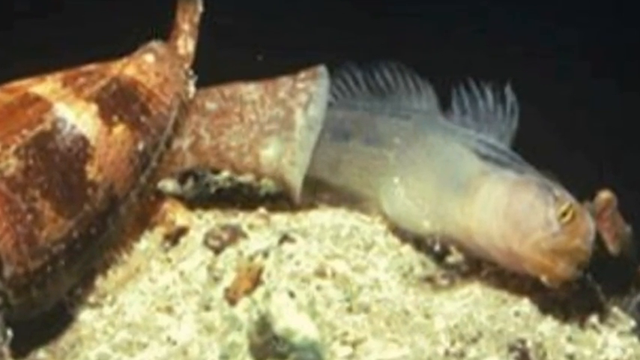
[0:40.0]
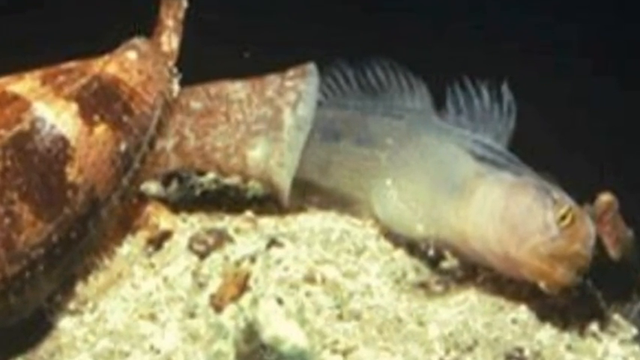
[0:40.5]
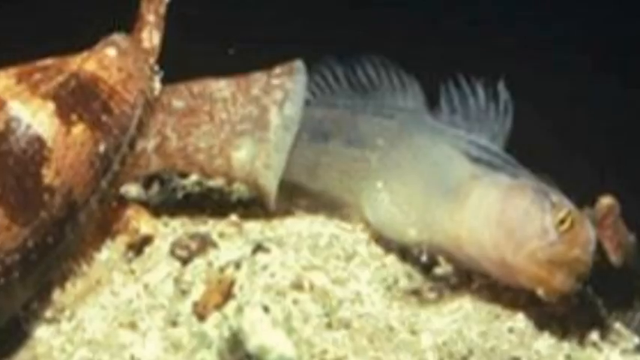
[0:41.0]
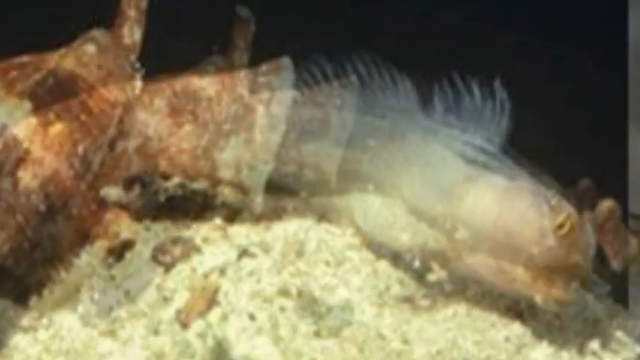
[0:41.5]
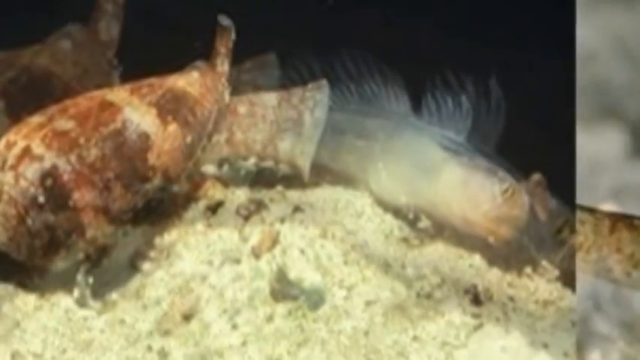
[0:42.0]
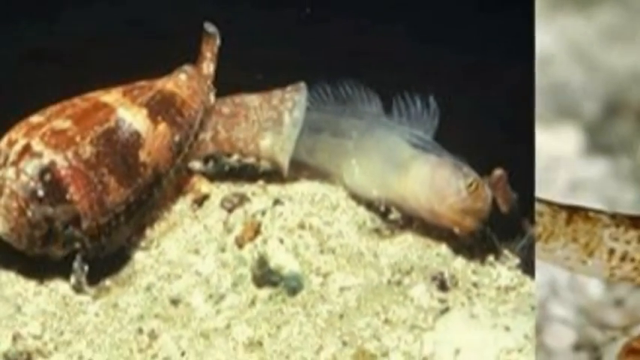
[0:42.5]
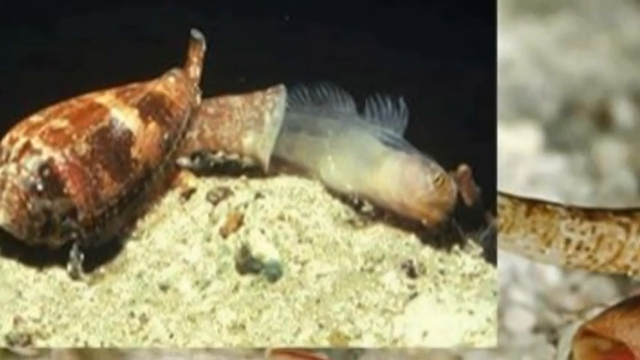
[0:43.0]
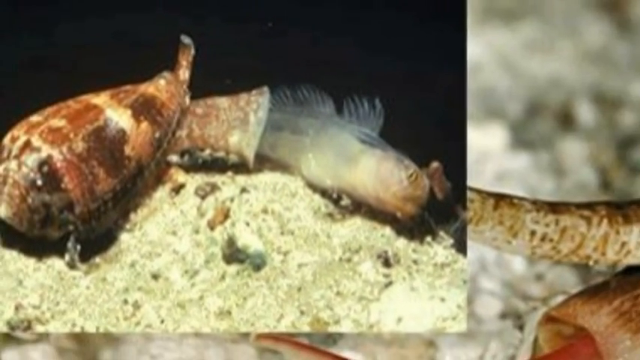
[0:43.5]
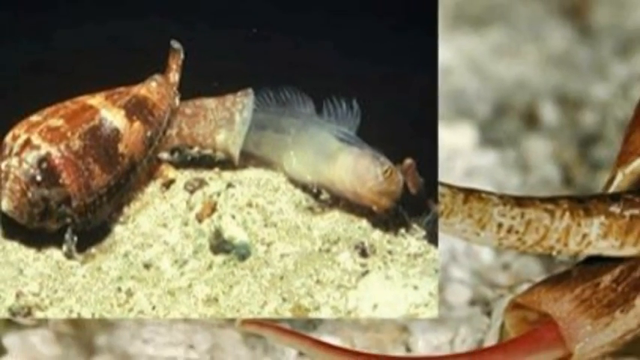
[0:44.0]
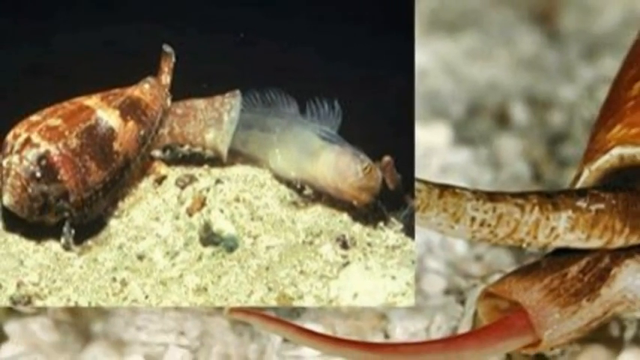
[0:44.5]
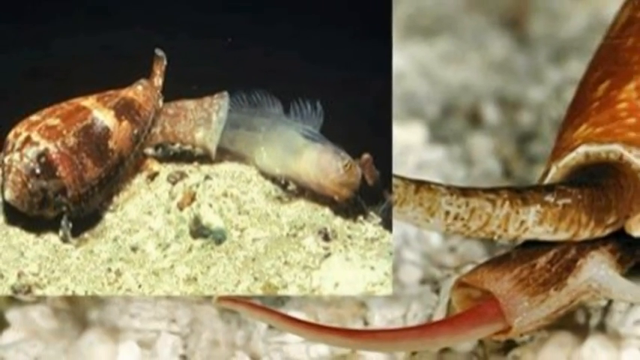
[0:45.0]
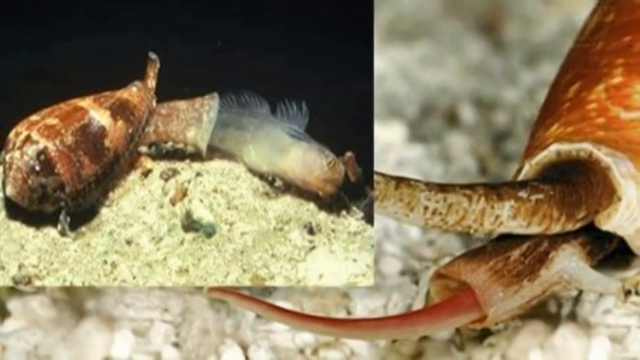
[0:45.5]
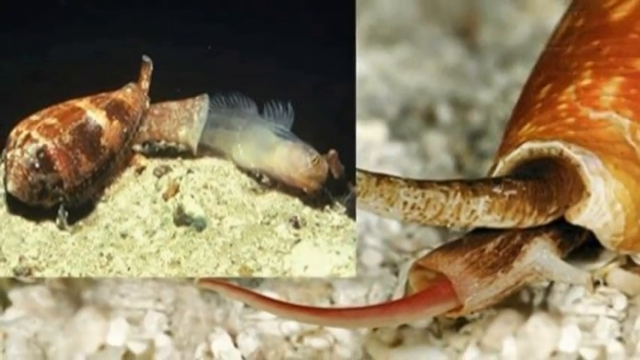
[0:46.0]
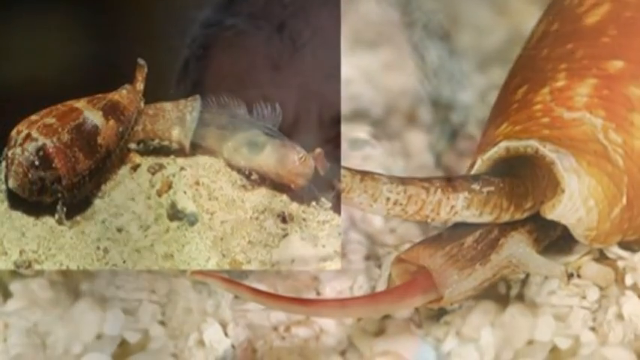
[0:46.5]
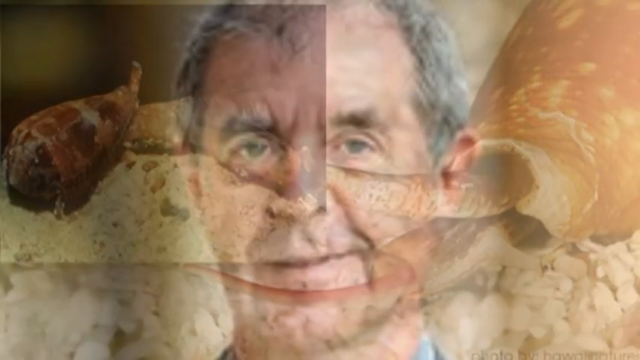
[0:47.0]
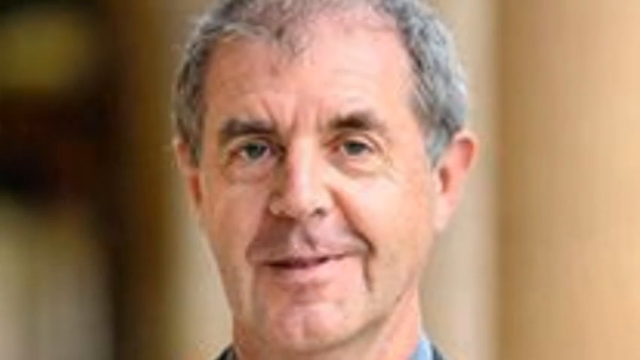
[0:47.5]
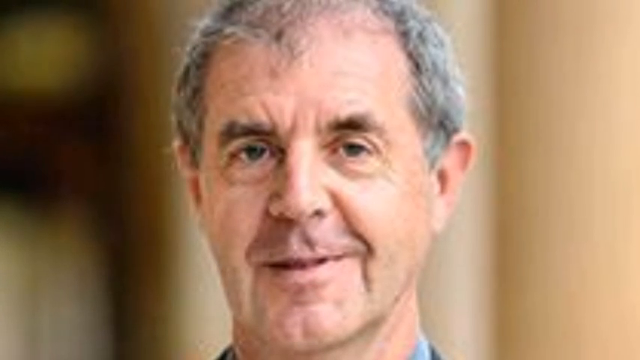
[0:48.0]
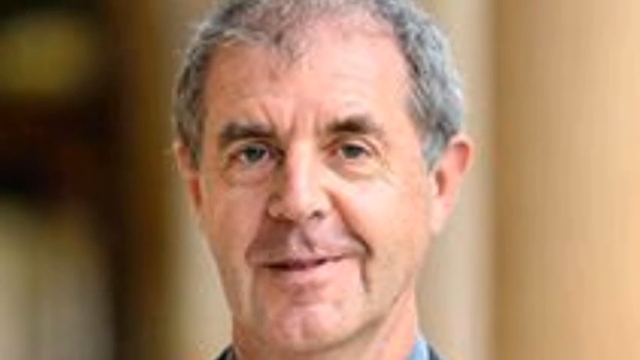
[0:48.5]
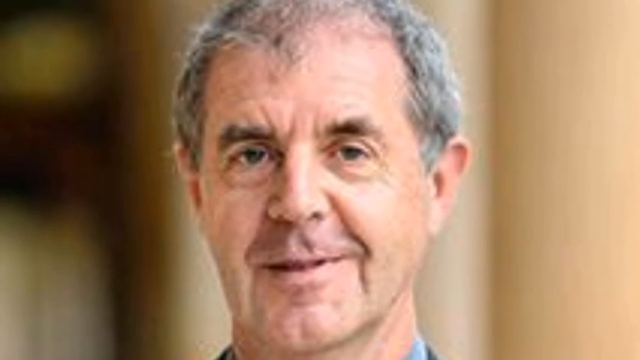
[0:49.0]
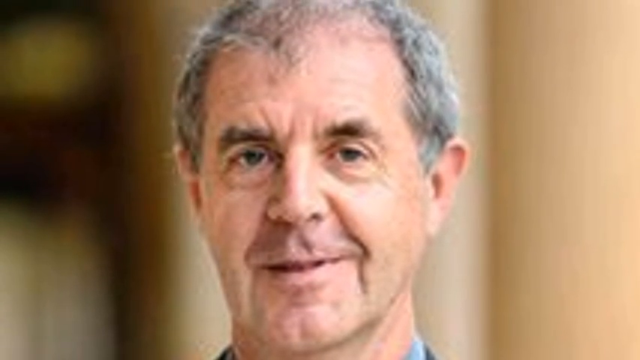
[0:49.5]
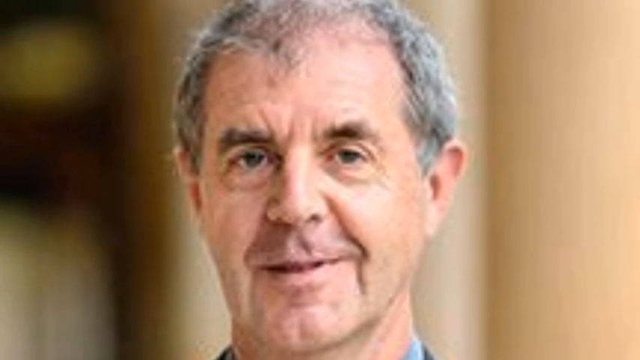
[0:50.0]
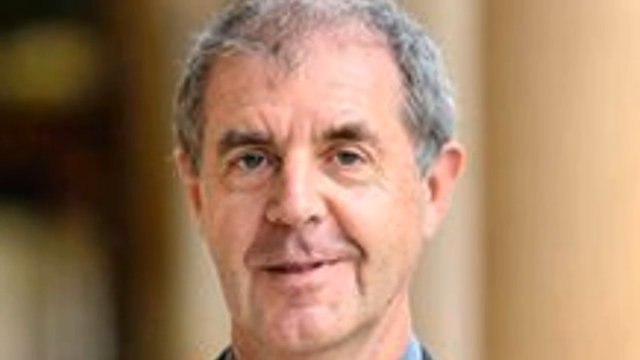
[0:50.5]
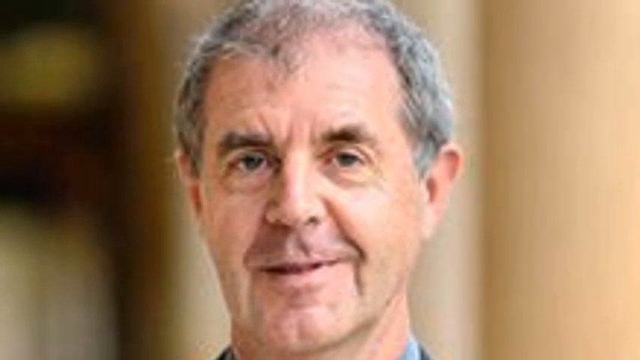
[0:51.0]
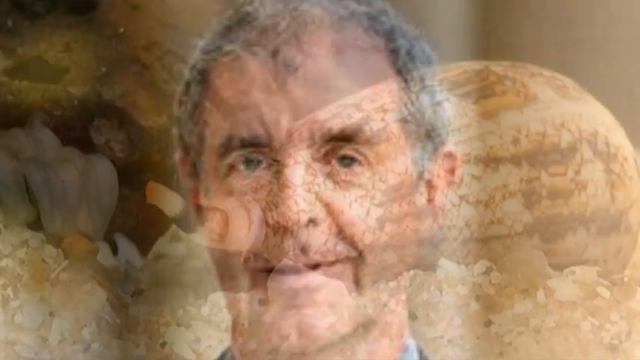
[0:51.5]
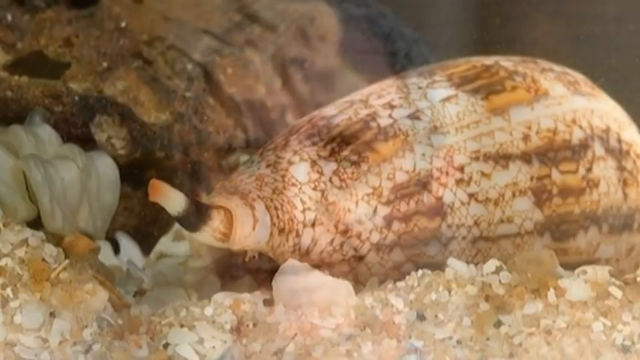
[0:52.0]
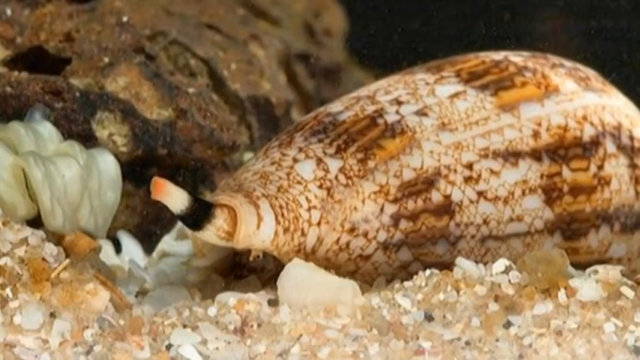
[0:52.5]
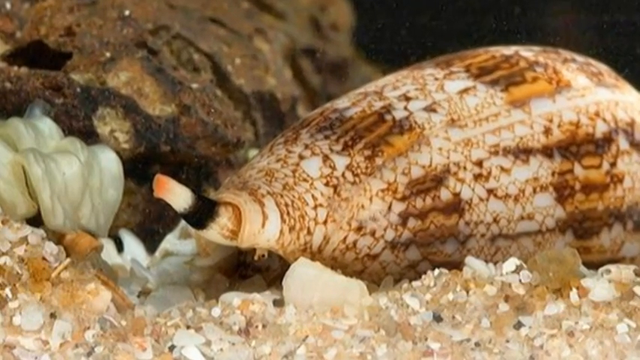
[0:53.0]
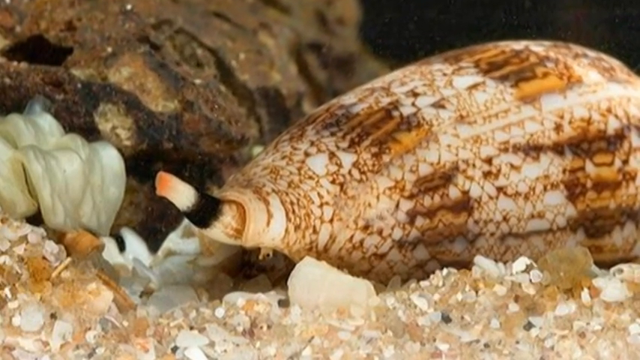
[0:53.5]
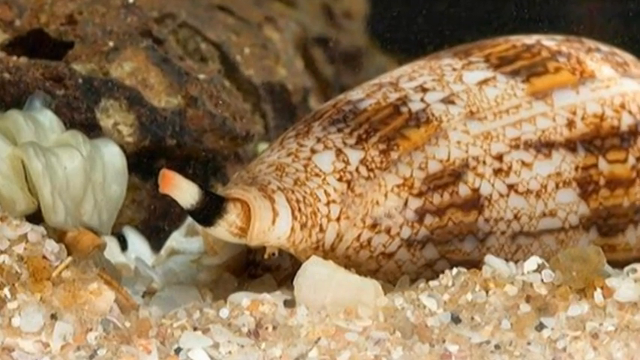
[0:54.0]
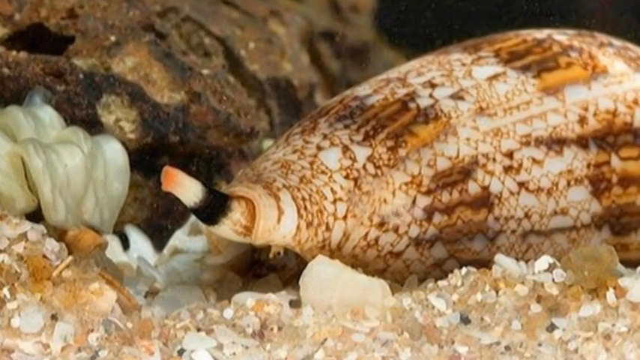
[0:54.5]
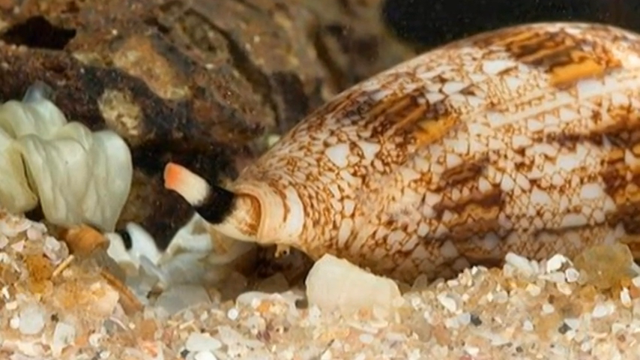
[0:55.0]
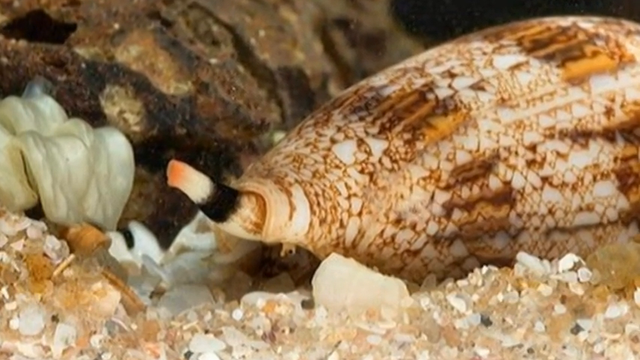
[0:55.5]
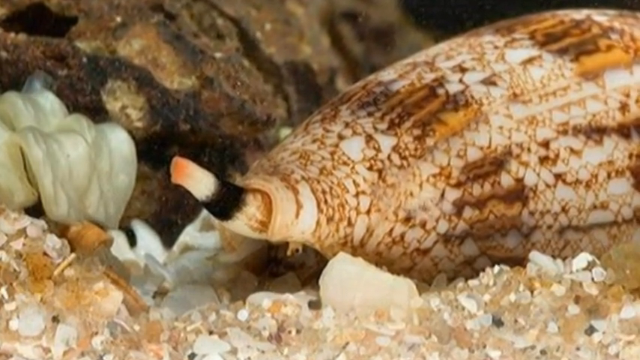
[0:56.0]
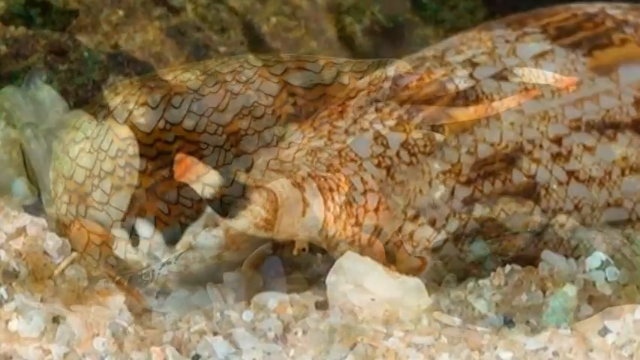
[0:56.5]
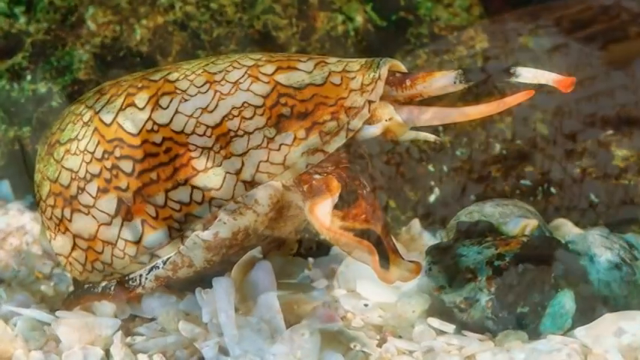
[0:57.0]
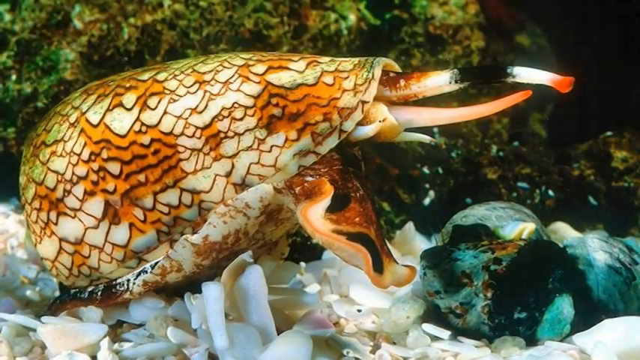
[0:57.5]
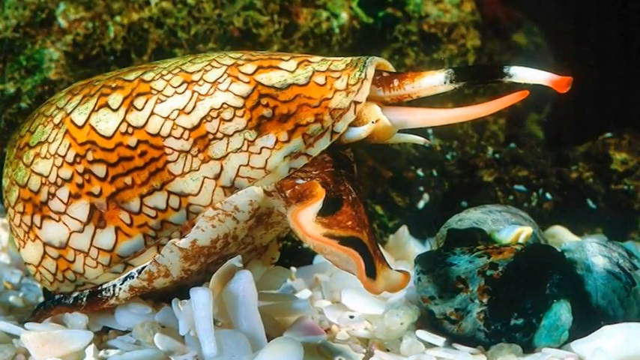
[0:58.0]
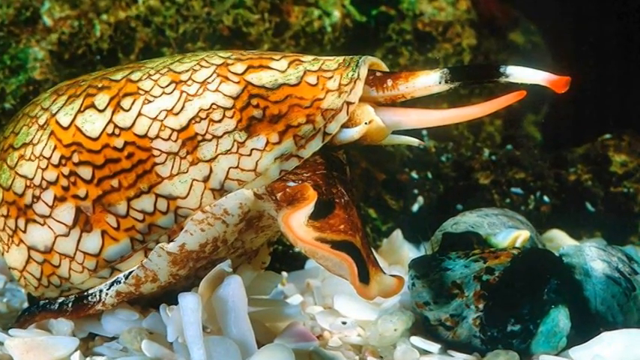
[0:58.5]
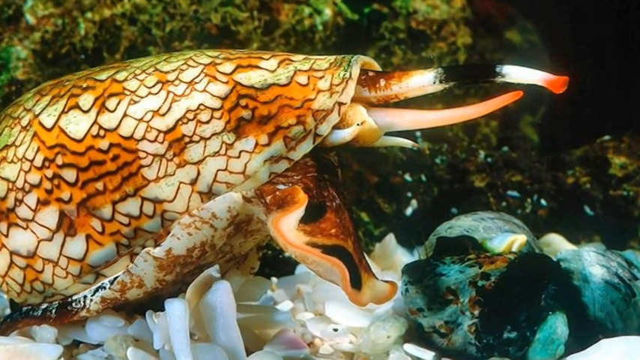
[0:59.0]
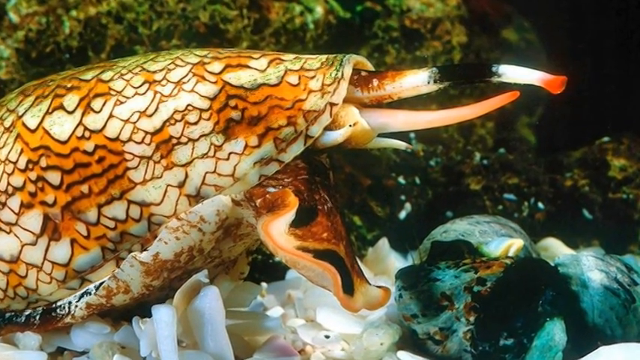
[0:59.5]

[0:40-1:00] The camera zooms close up to the fish and then zooms out. A split screen shows, in the portion to the right, the shell creature's harpoon that has the venom. The video then fades into a headshot of a man who looks late middle-aged, maybe in his late 50s or early 60s, with hair that is partially gray and partially balding. The camera zooms out. Another shot shows the shell creature with its proboscis or nose extending out of the shell. A fade leads to a different shell creature of the same species that appears to have a different design on its shell: more well-defined brown lines that look almost like modern art, resembling white and orange scales with a brown outline border. The proboscis and the harpoon stick out of the shell. The photo zooms in with a Ken Burns-type effect.